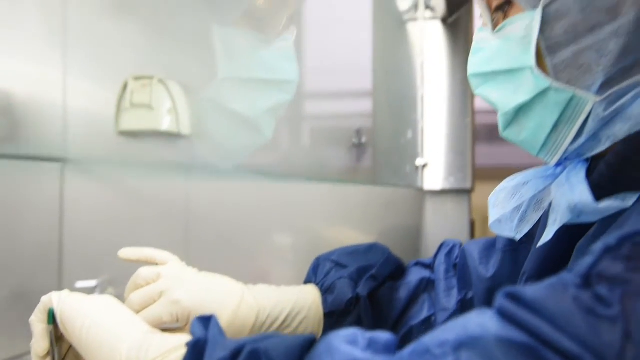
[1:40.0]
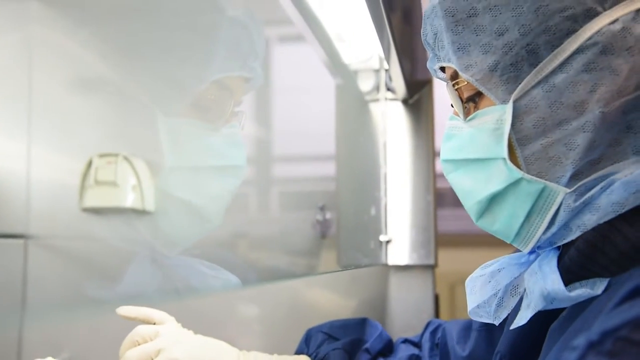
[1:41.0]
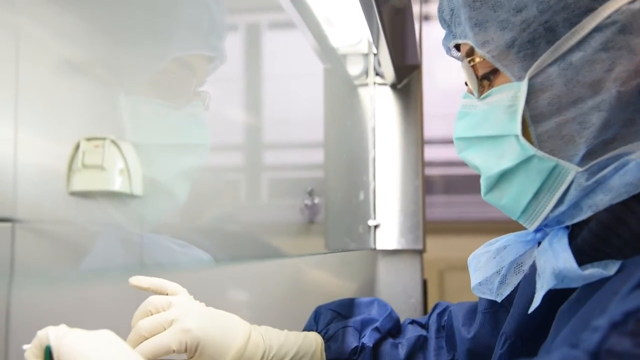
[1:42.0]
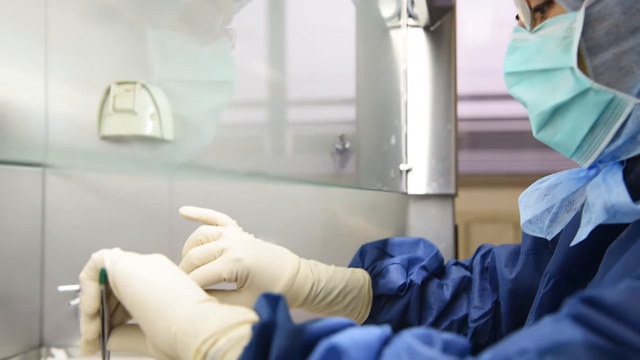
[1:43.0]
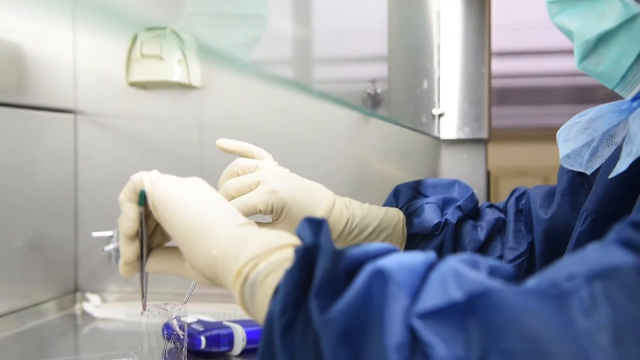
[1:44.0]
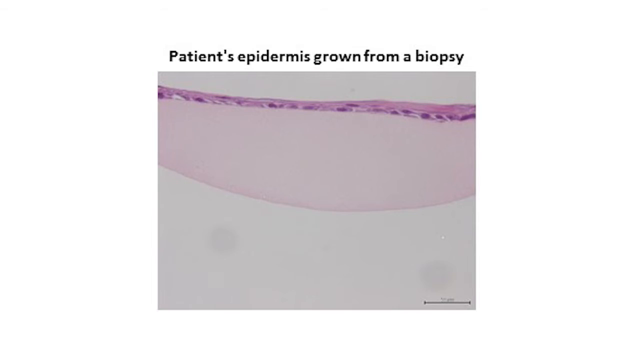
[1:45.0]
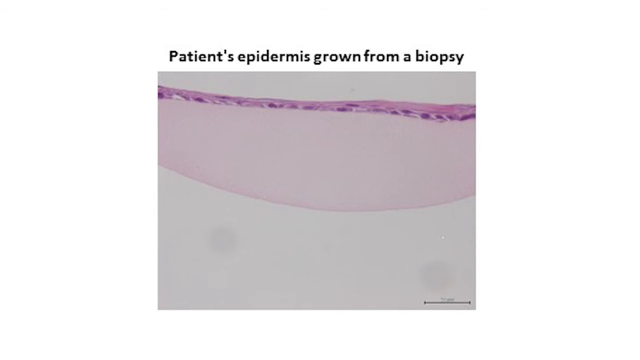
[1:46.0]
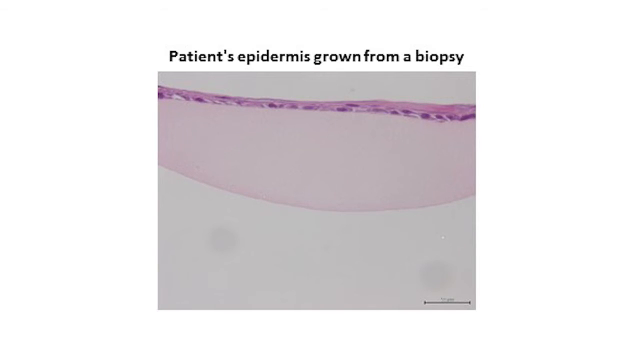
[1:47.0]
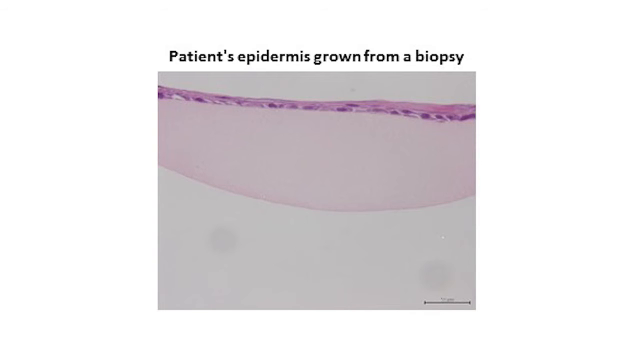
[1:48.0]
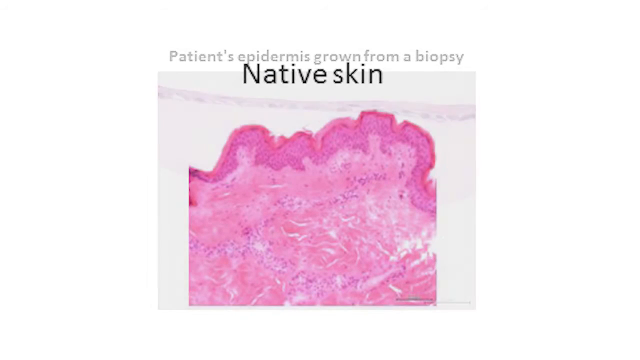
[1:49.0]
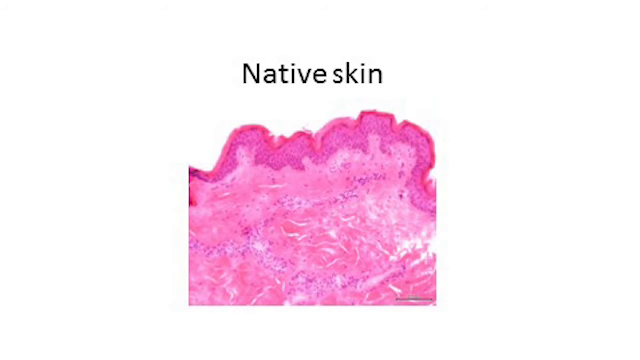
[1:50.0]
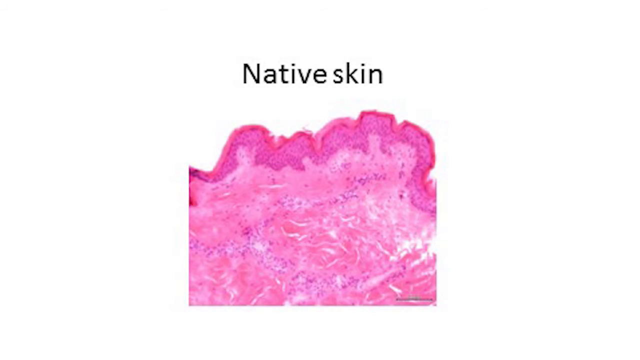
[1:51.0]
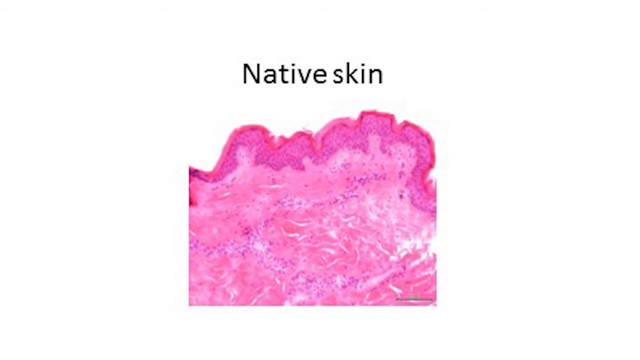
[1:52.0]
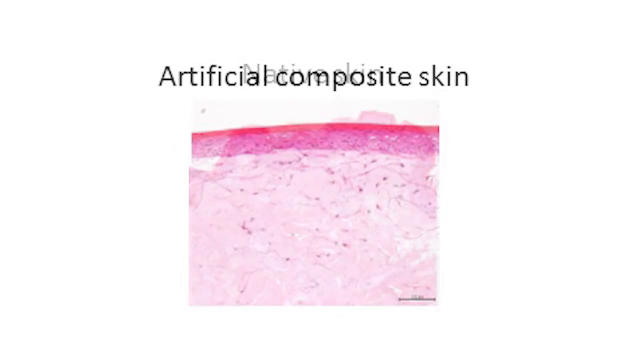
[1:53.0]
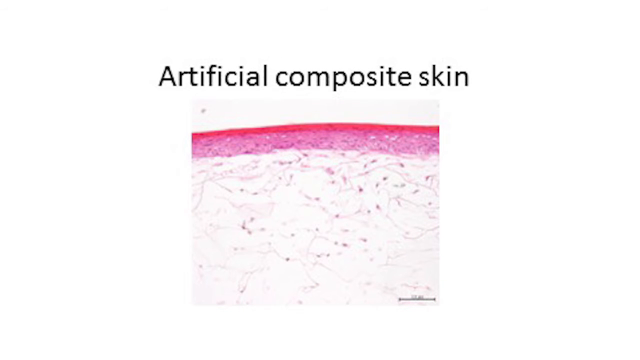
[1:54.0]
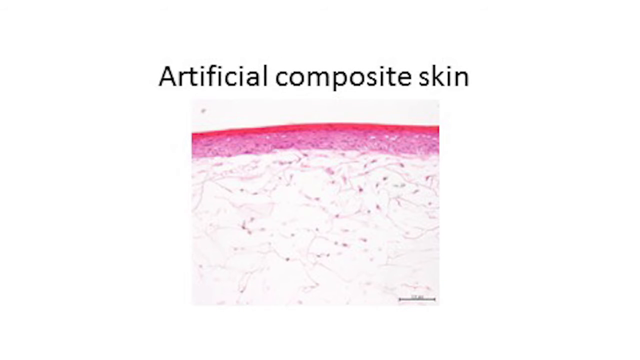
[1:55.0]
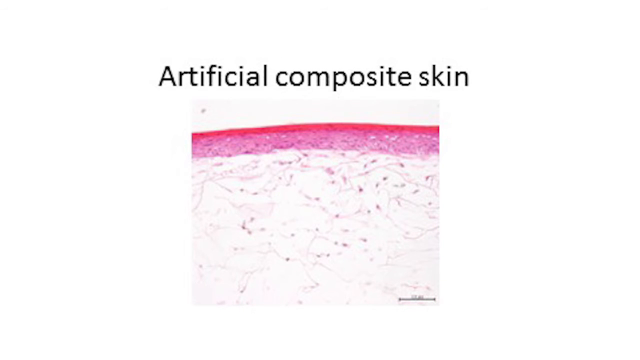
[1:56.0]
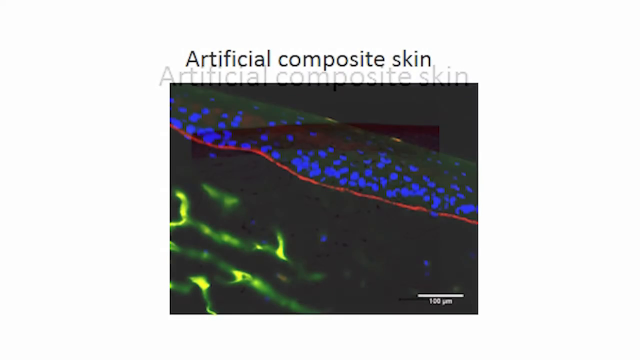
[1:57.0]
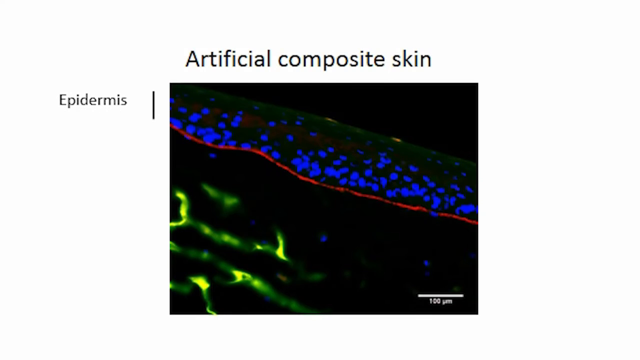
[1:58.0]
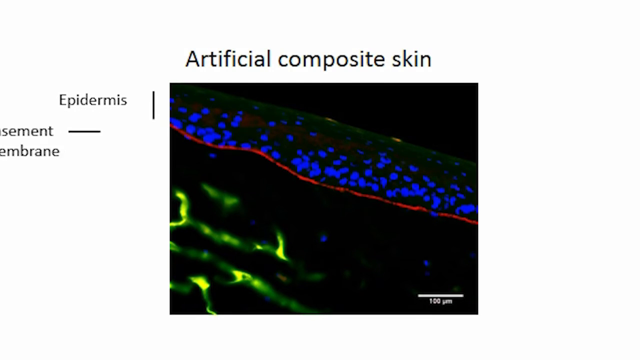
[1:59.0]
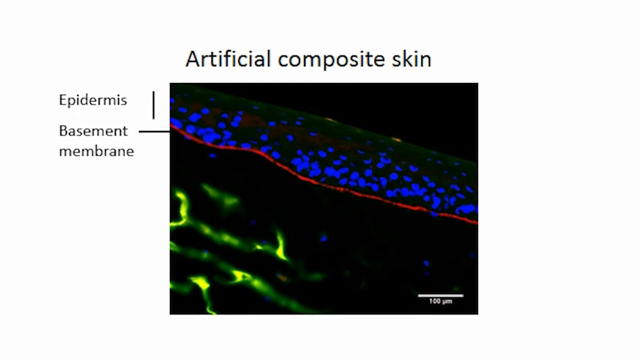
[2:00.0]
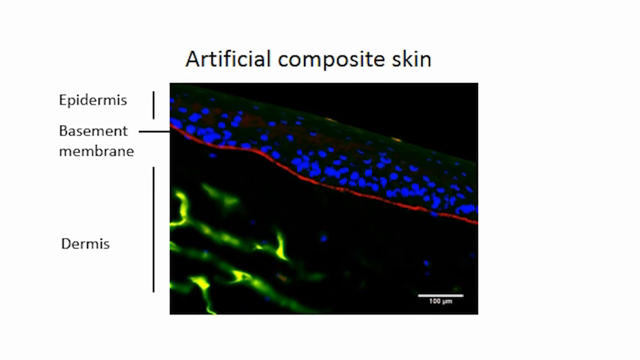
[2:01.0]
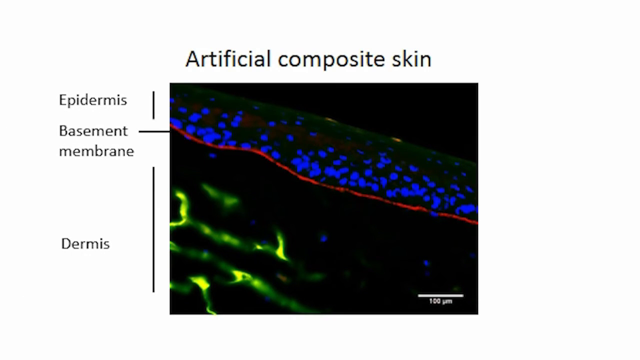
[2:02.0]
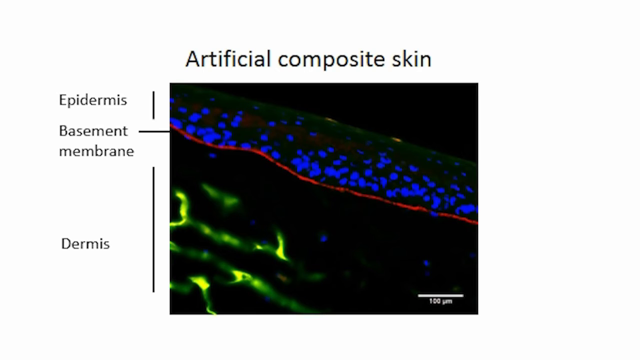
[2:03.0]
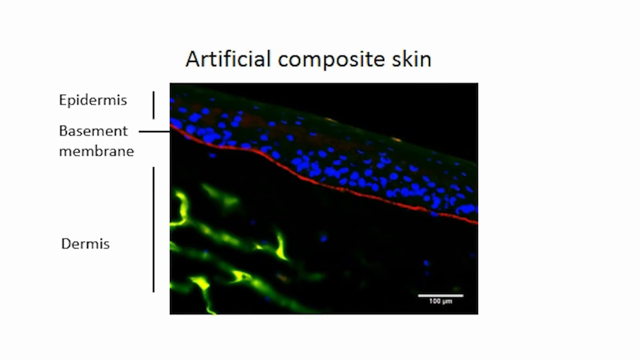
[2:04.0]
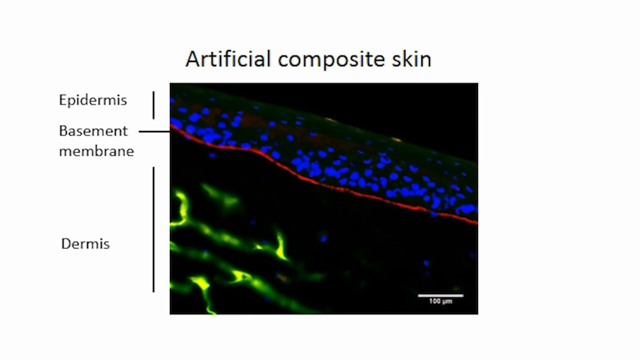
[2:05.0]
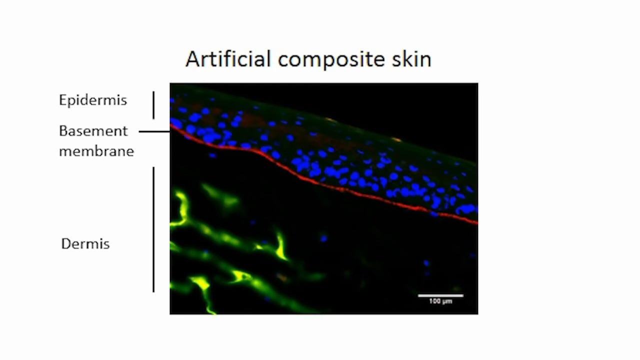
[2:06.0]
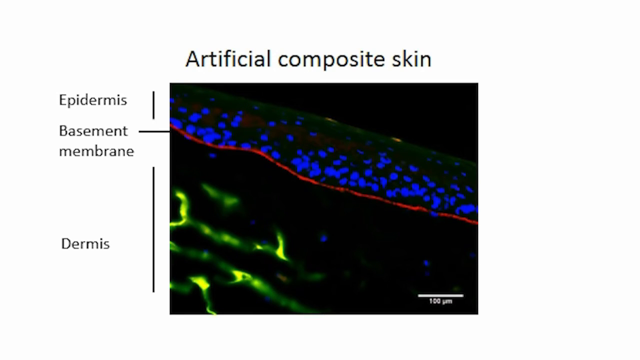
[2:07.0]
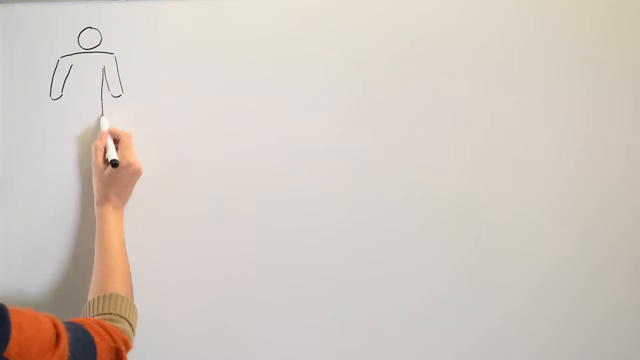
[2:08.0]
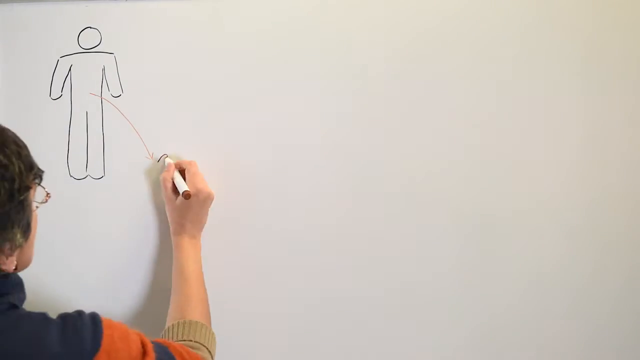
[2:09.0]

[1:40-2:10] A gowned-up person works on some pink liquid. The video then shows a patient's epidermis grown from a biopsy, in what looks like a picture taken through a microscope: a purple layer with darker purple spots. Next, a section labeled "native skin" appears bumpy, with a pink and red striped line at the top that looks hilly and bumpy; further down it is still pink, with areas of white. Then "artificial composite skin" is shown, looking very similar but smoother. Under a microscope the artificial composite skin shows a section of epidermis, the basement membrane and then the dermis. On the right is an area spotted blue, and toward the bottom there are streaks of yellow.